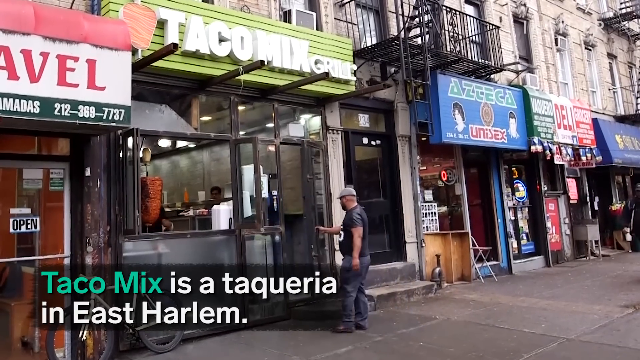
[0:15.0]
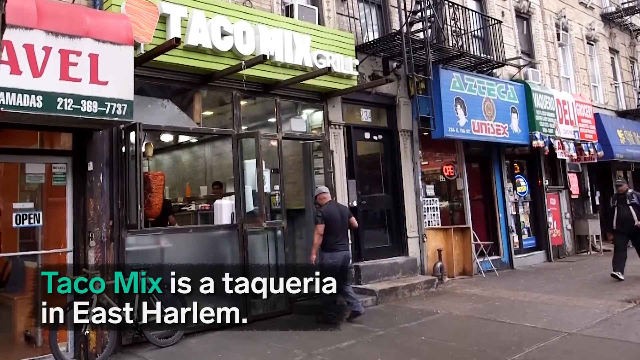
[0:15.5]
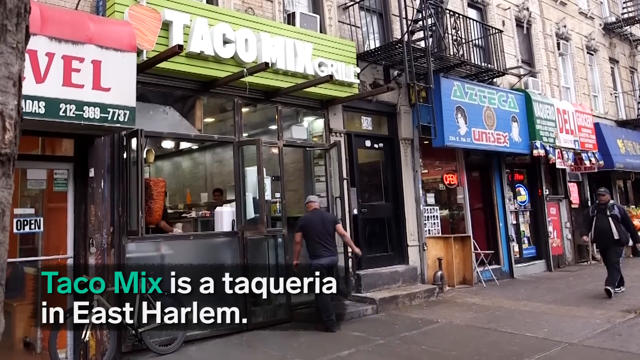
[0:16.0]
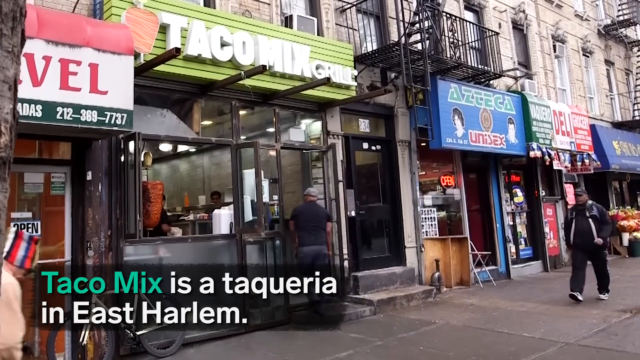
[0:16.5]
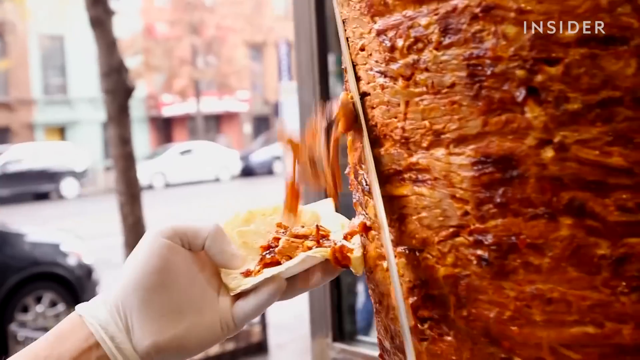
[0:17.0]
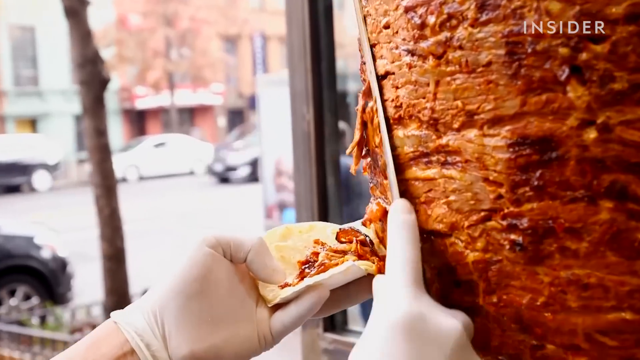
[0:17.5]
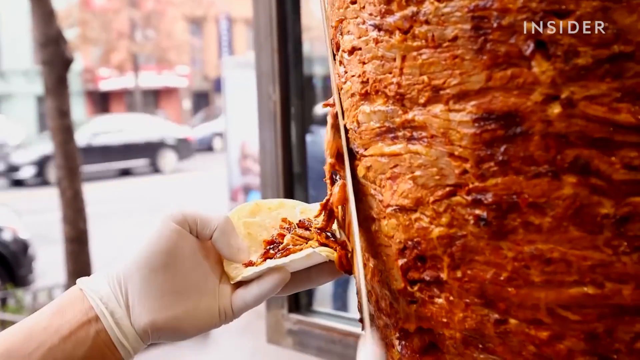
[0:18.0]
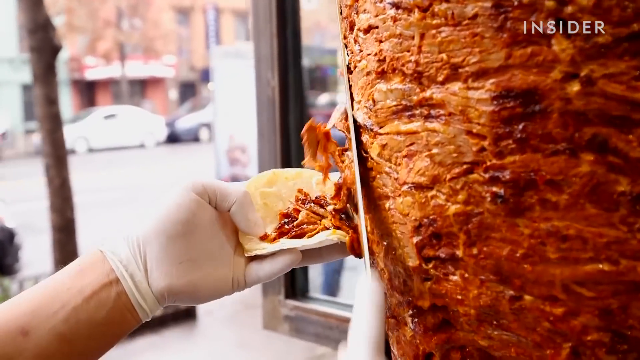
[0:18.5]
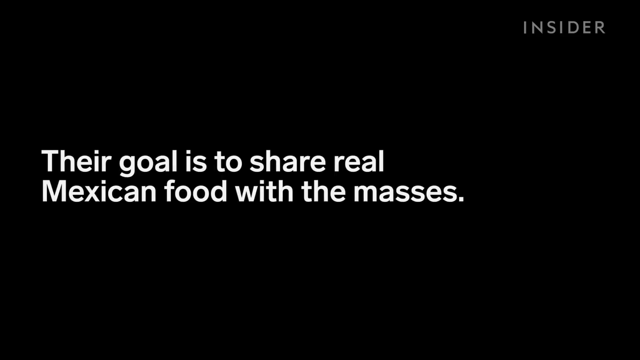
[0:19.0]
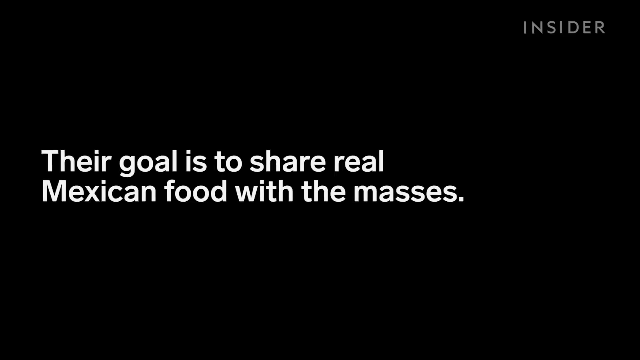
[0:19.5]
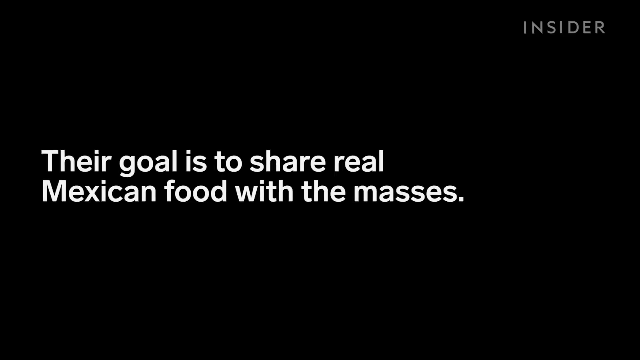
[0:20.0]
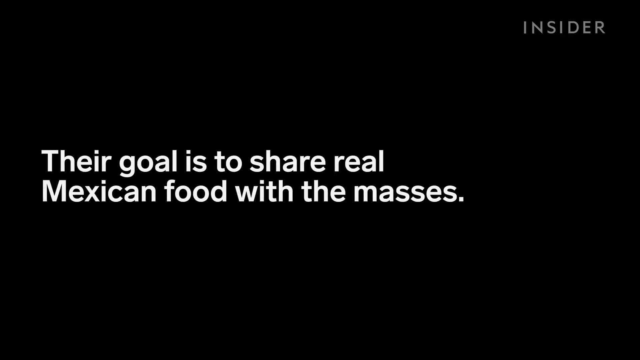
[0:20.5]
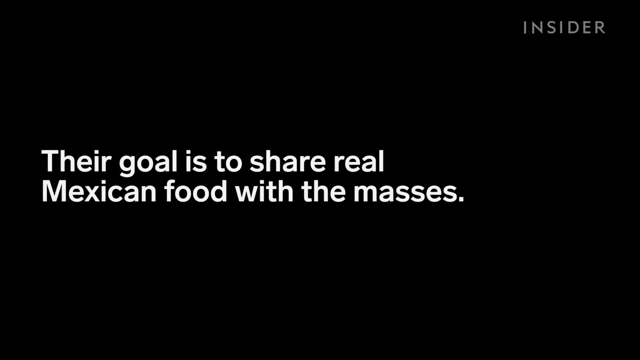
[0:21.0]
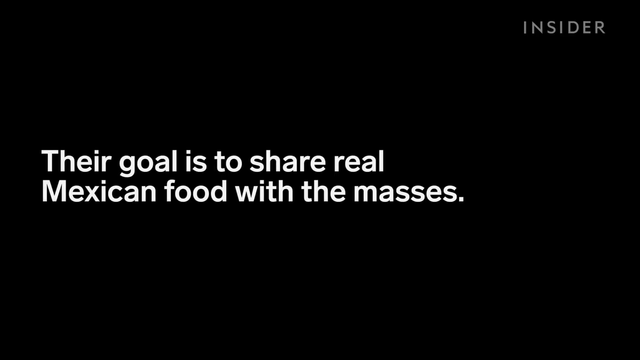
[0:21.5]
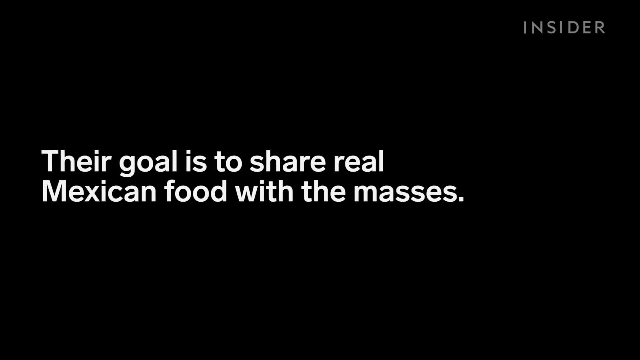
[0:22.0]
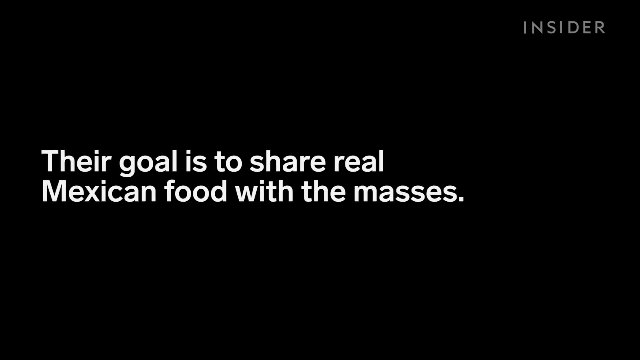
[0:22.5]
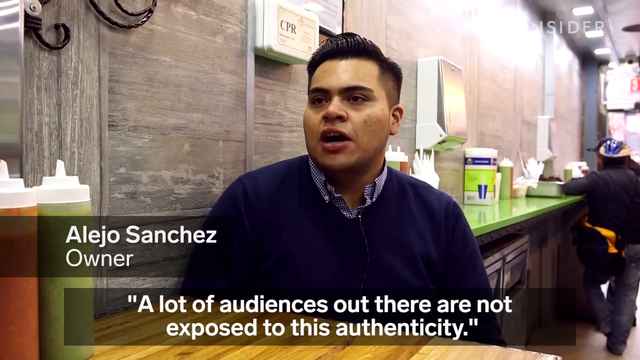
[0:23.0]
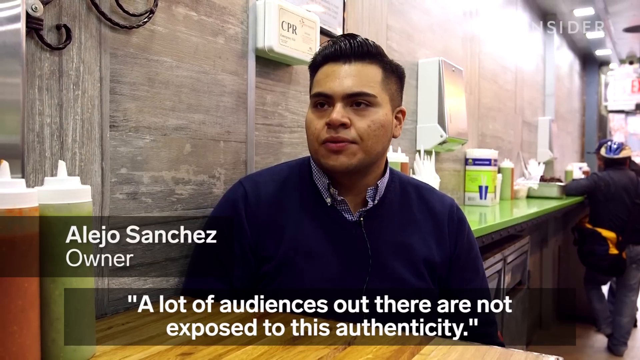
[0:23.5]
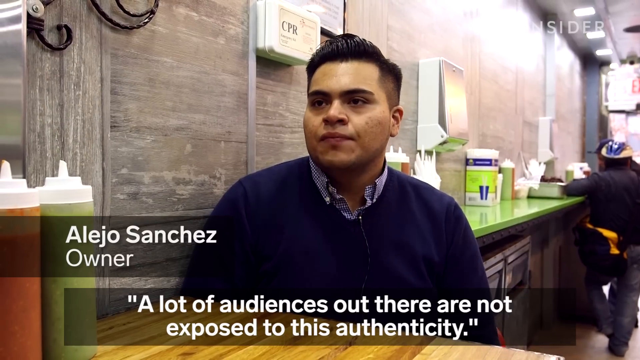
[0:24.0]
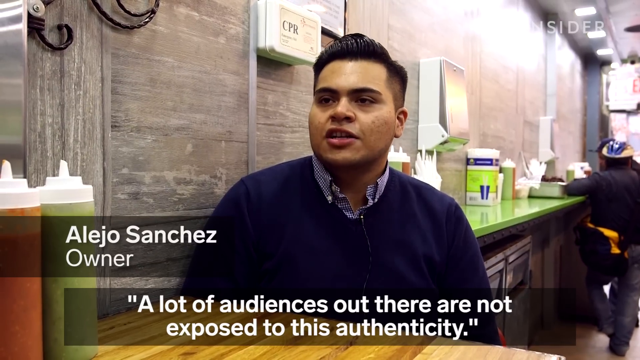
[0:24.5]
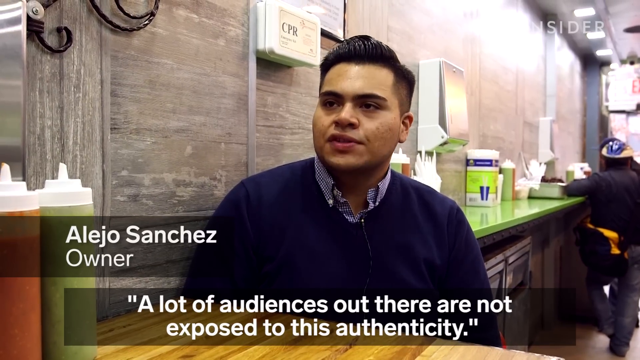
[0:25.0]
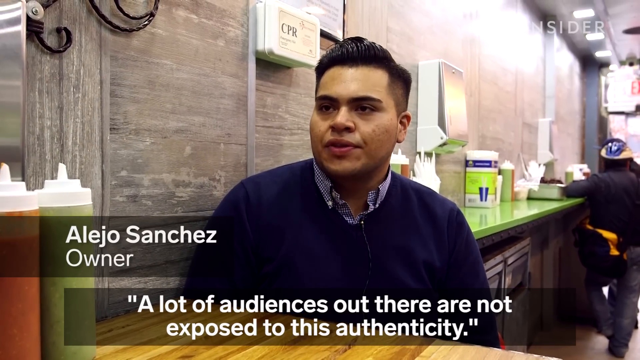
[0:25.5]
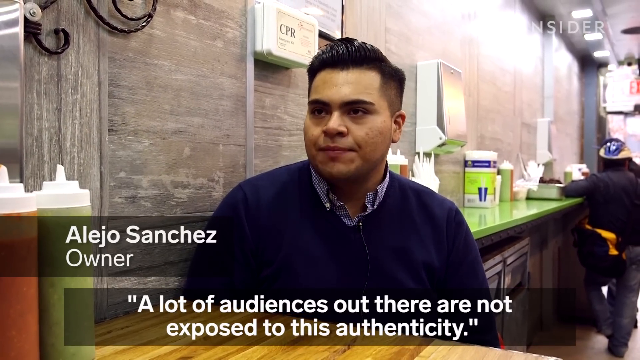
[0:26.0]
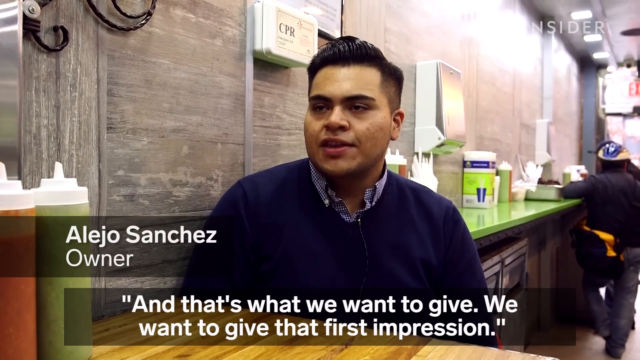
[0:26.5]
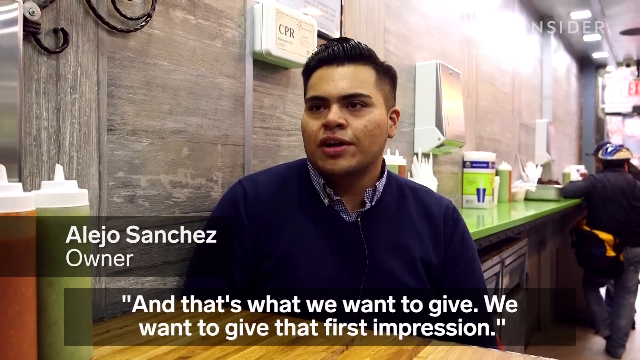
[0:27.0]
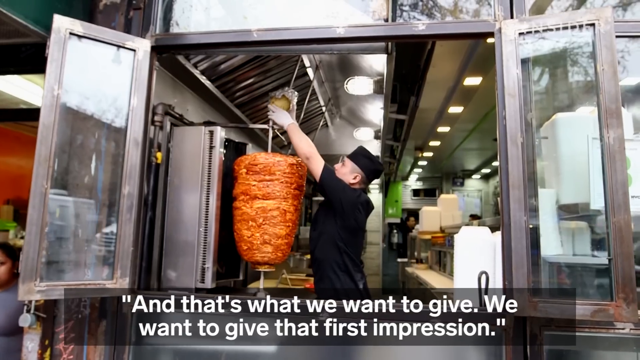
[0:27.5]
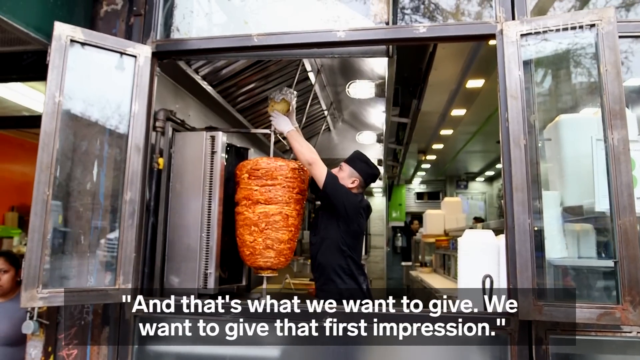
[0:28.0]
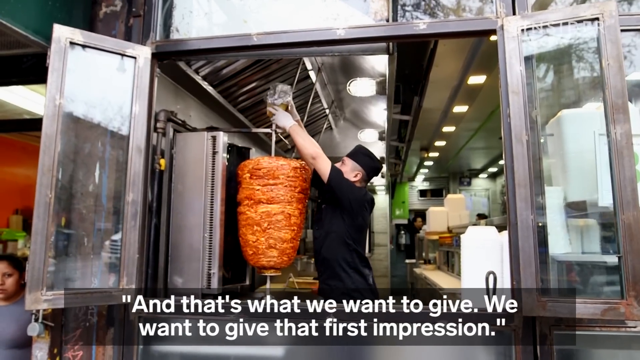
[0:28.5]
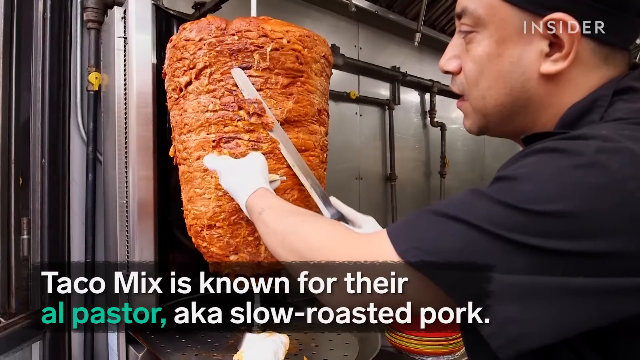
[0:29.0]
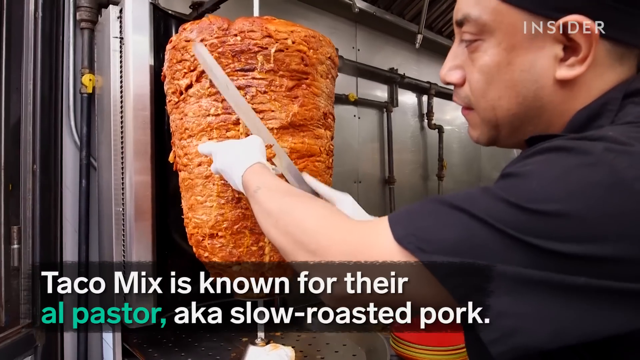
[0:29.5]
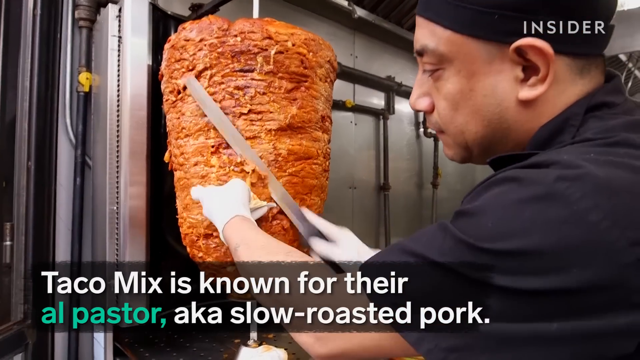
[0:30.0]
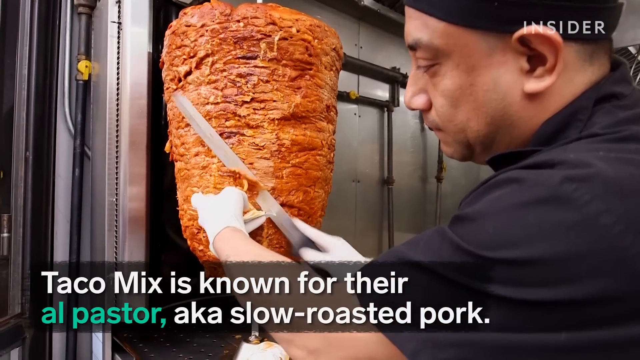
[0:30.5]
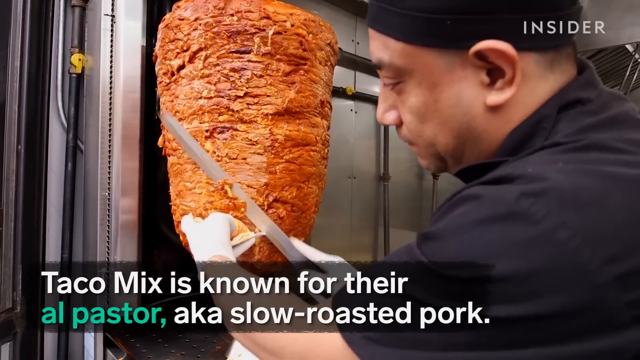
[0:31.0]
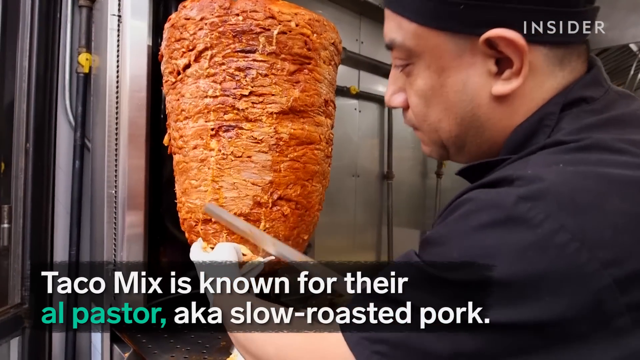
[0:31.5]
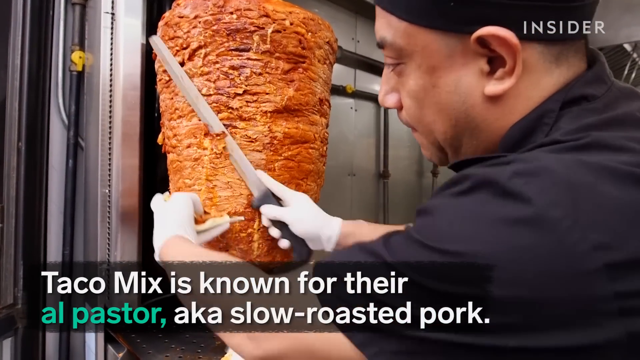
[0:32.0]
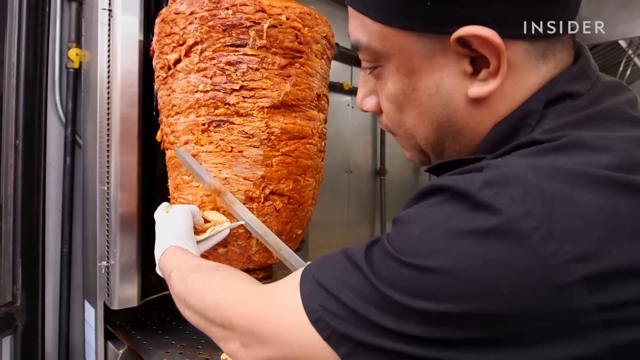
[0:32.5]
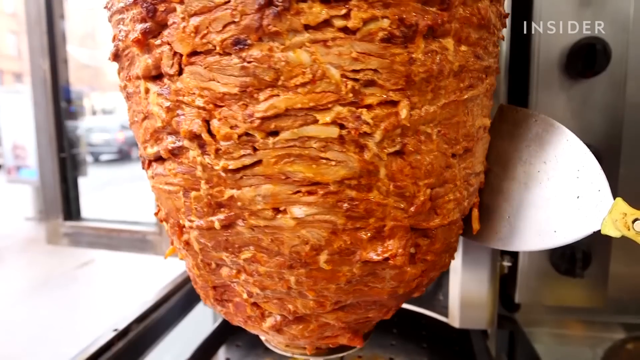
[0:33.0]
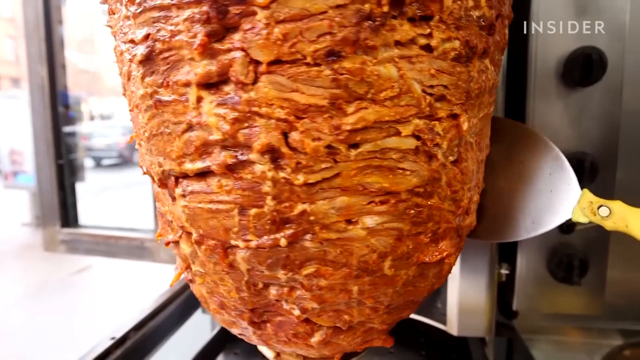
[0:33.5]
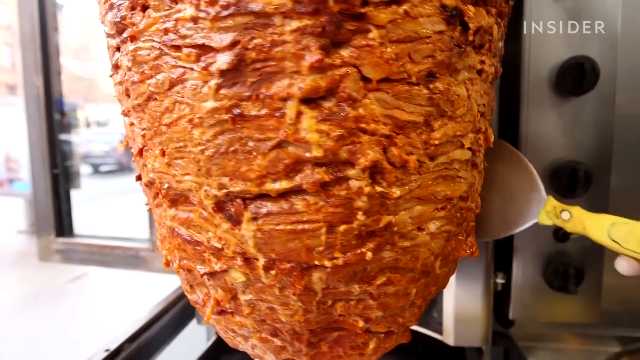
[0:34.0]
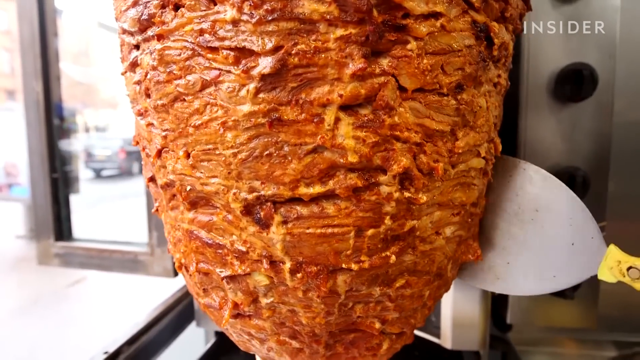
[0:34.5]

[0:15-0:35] The shot starts outside the building of the restaurant, Taco Mix, a taqueria in East Harlem. Pork is sliced off onto a tortilla, and text says their goal is to "share real Mexican food with the masses." The location changes to Alejo Sanchez, who says he is the owner. He is sitting down, apparently in the restaurant, maybe at a seat near the back, at a table with a green countertop behind him, and he looks pretty young. The video goes back to the pork as another worker slices from the big hanging piece of pork on the side. The restaurant is known for its slow-roasted pork, and the pork just hanging there is shown along with the flat tool that slices it off onto the tortillas. The place looks like a little hole-in-the-wall. The man slicing the pork wears a black hat, a black uniform of sorts, and white gloves. Inside the restaurant there appears to be narrow seating and green countertops, and the space looks pretty narrow.